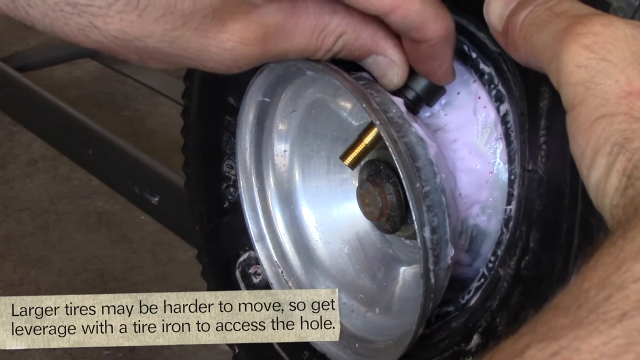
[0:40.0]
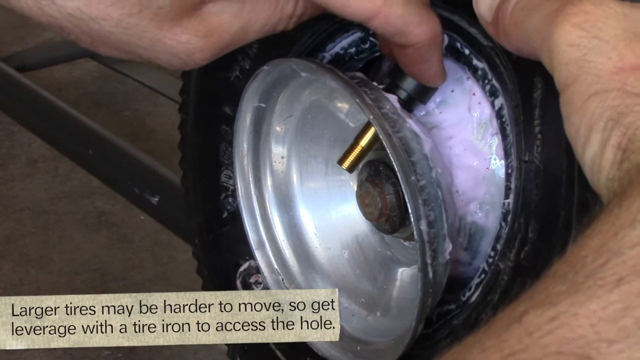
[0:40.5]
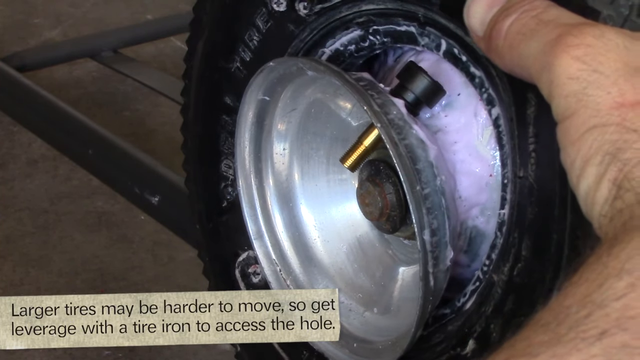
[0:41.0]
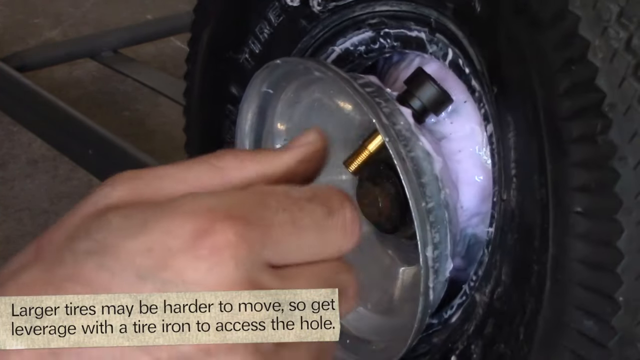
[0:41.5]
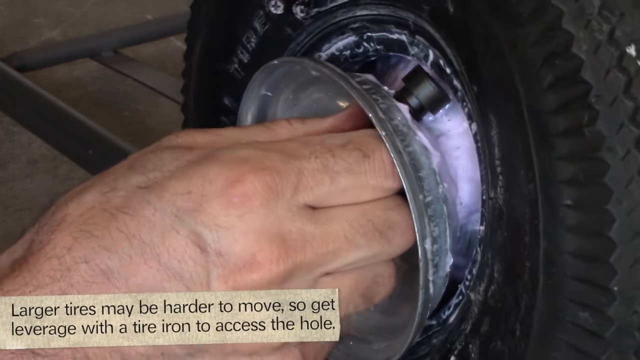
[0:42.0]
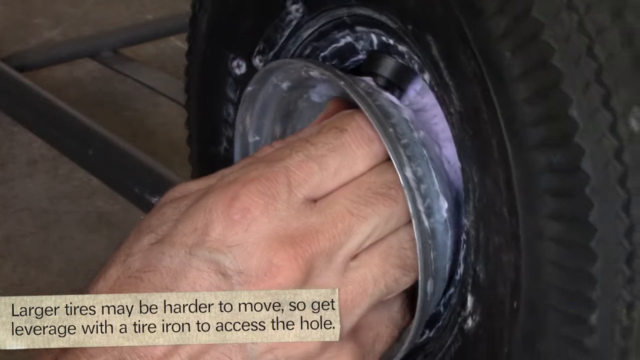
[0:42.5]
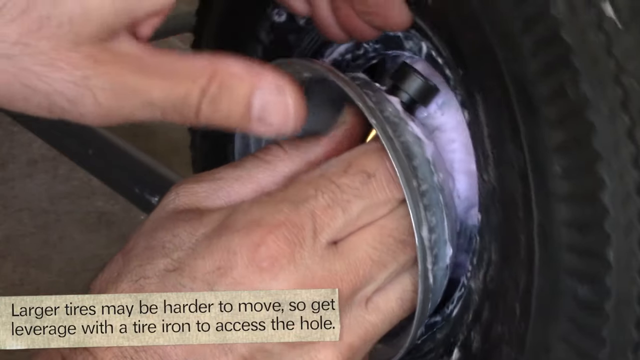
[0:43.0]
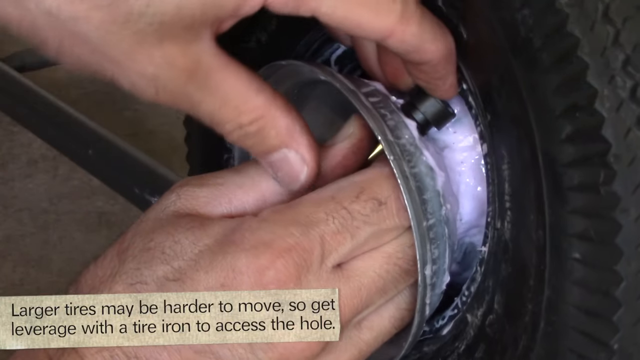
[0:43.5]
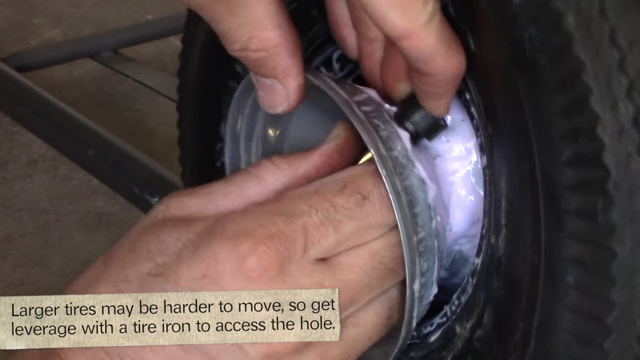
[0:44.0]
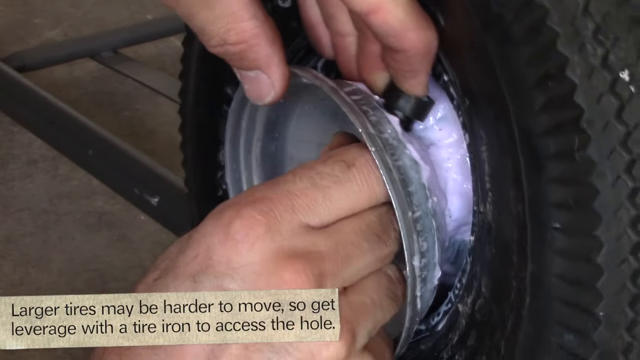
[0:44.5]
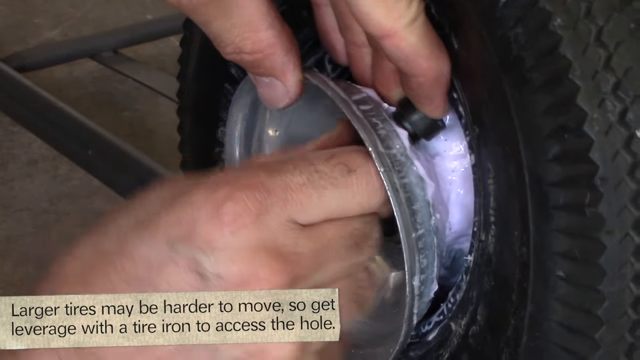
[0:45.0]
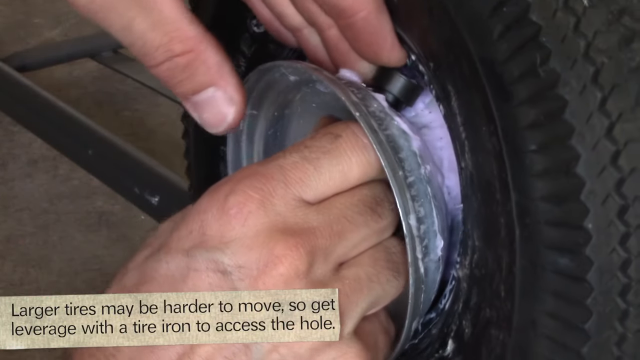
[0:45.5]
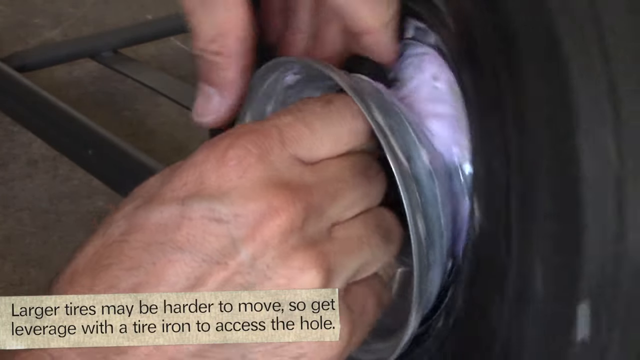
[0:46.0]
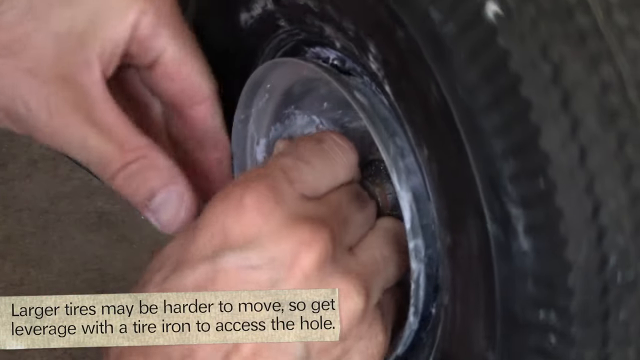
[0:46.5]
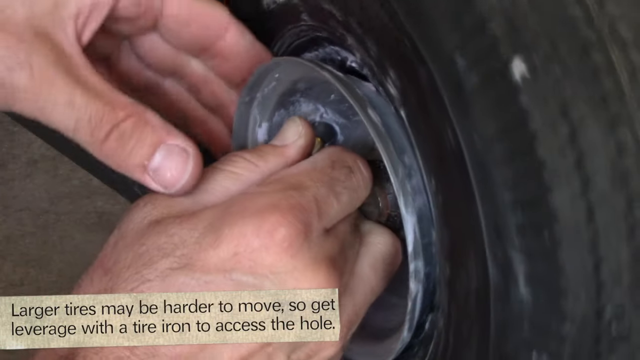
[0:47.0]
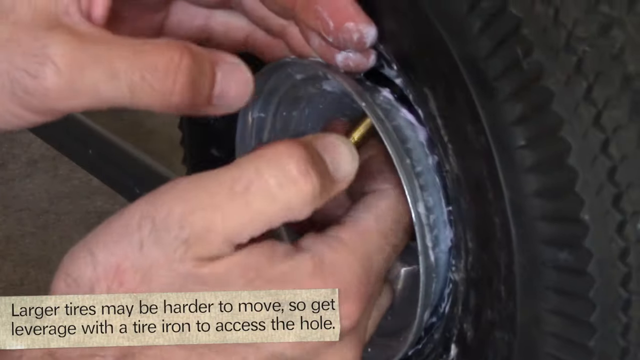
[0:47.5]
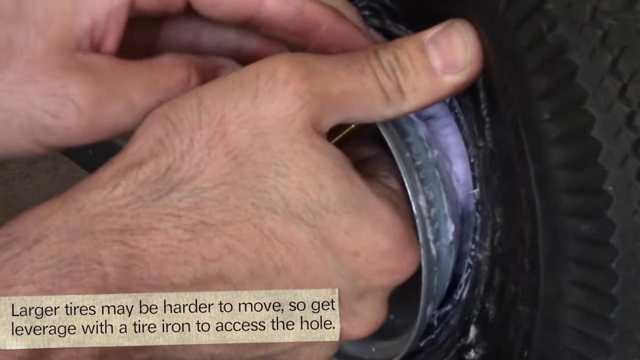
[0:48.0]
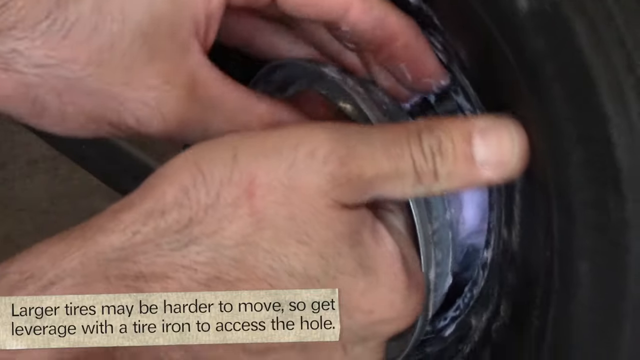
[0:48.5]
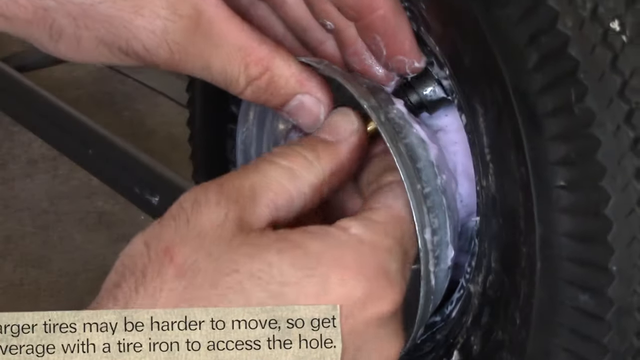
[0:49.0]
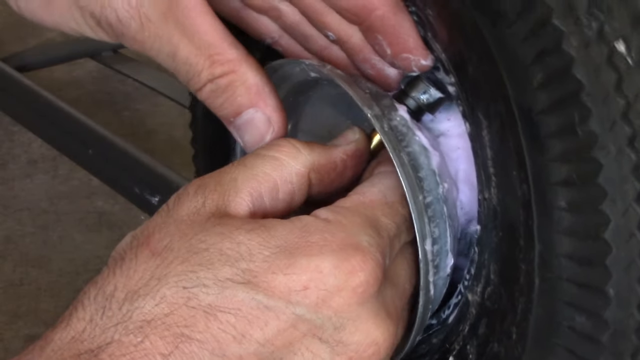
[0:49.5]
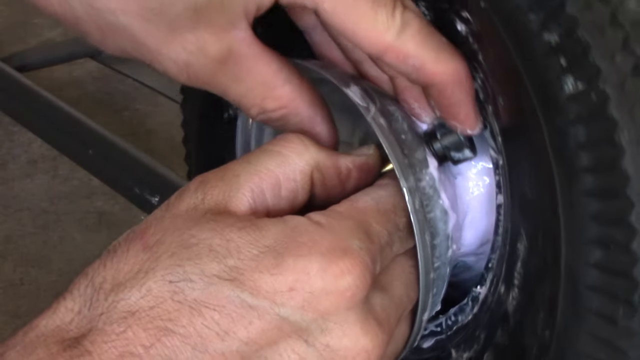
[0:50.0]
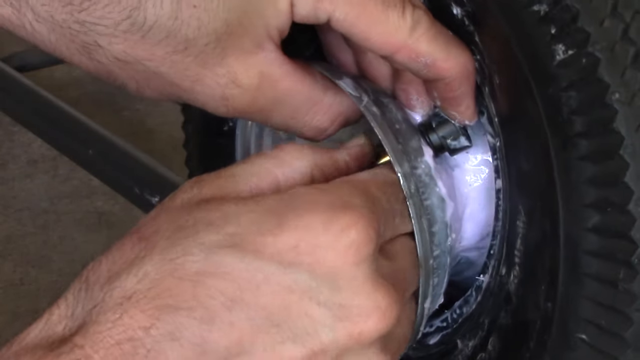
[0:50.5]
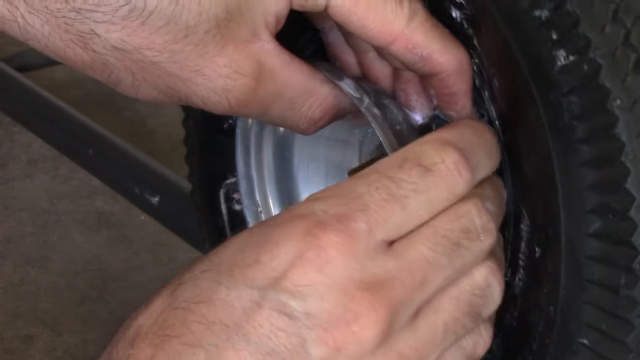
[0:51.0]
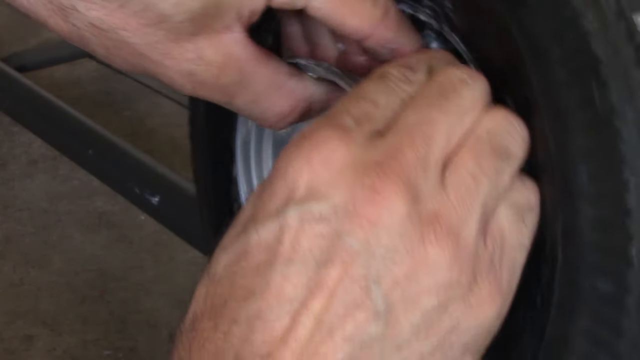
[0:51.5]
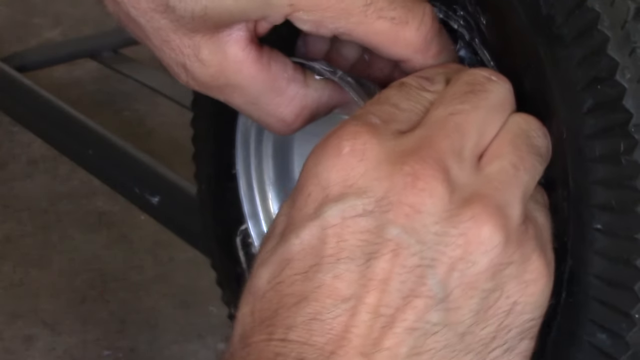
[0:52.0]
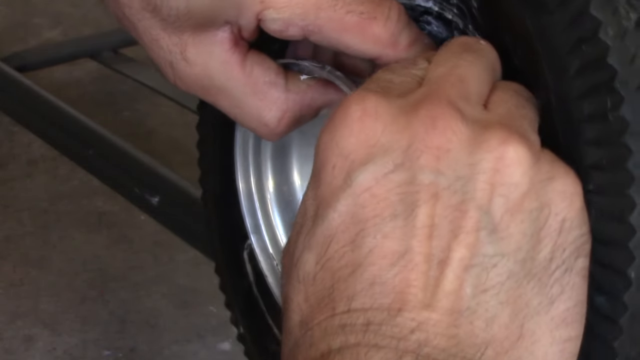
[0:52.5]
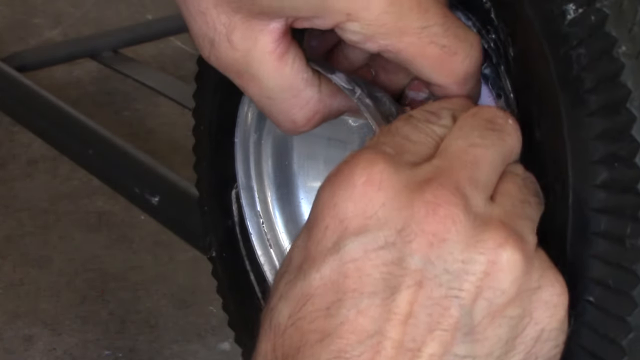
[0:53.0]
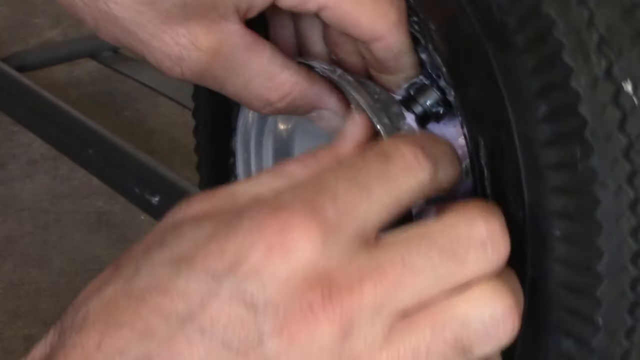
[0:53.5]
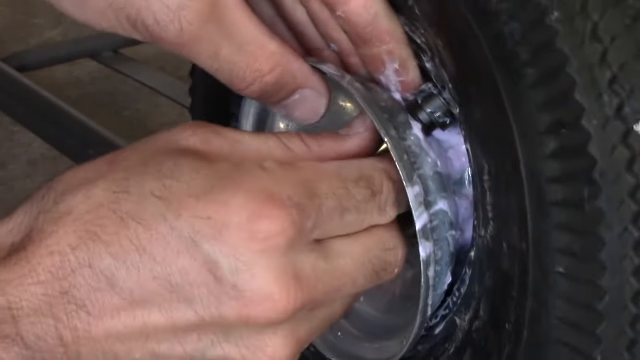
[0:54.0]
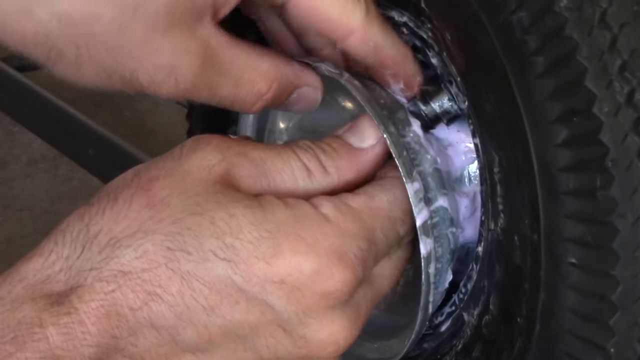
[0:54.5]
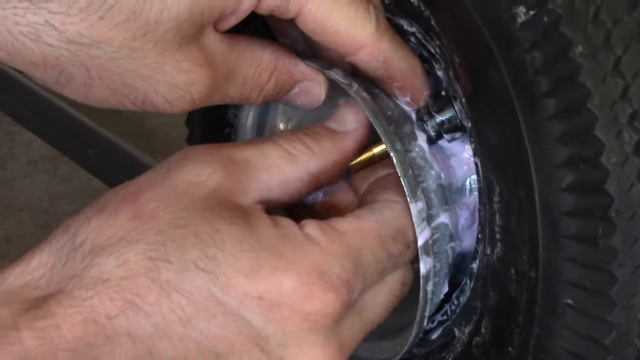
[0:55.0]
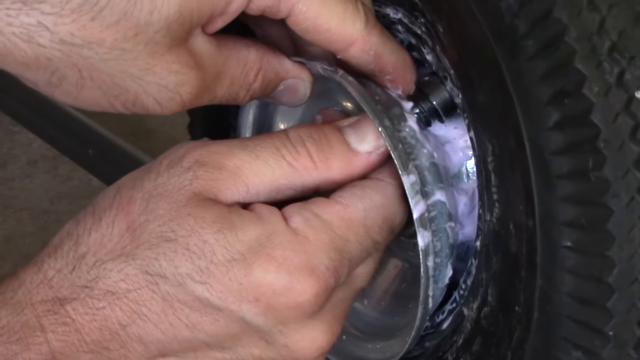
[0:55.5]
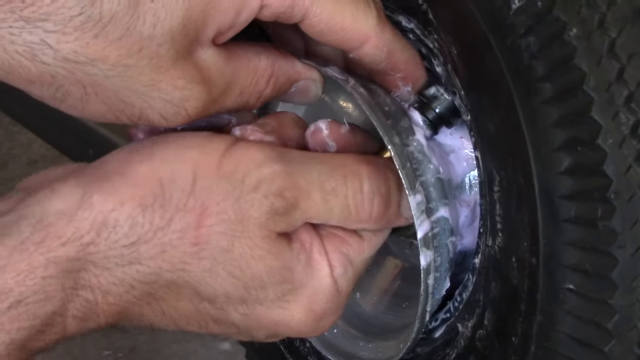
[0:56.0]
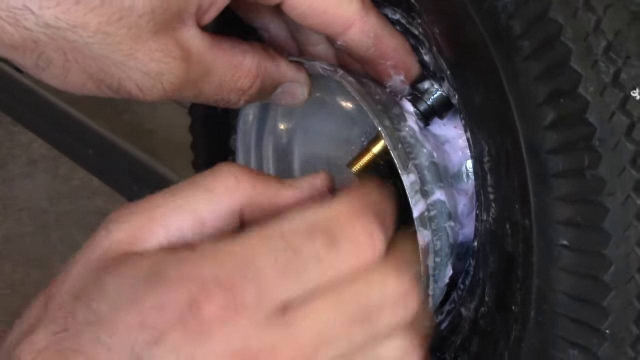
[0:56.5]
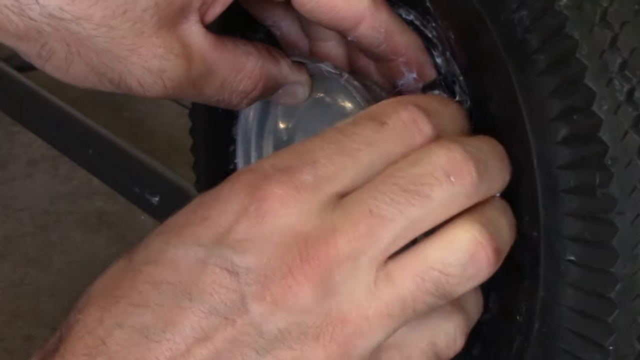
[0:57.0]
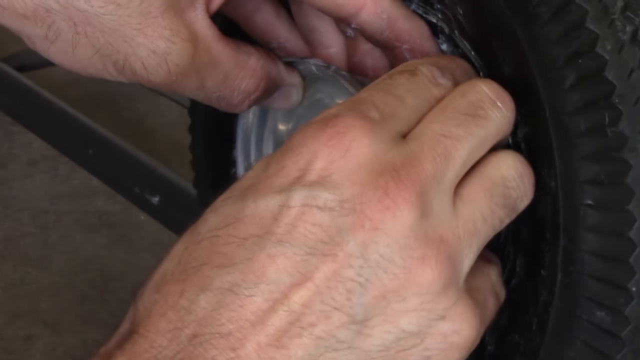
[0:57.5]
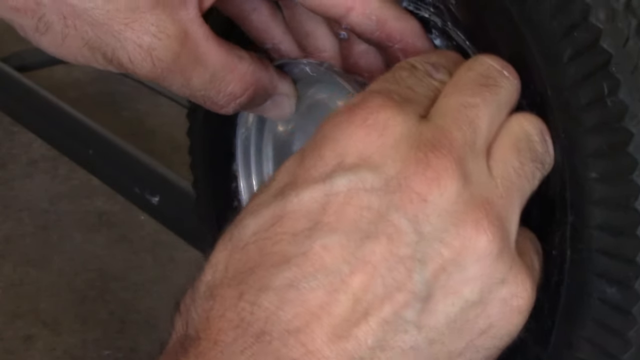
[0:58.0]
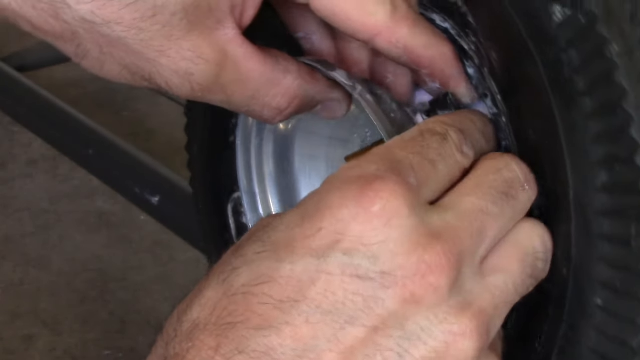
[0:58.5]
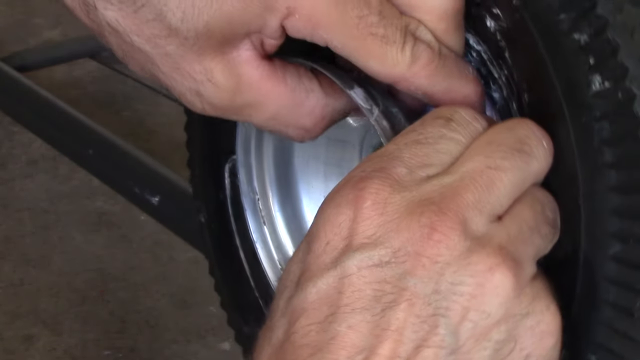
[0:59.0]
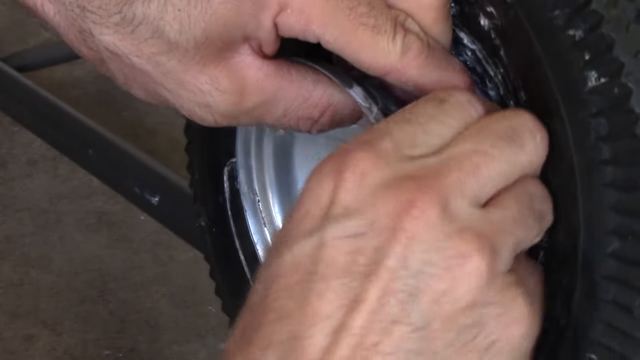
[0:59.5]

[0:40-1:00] The man has rotated the tire so the area with the valve stem is toward the top. He uses his right hand to separate the rubber of the tire from the metal of the rim while his left hand inserts the new valve stem through the back of the rim, pushing it through toward the front. He then moves his hand, pressing the back of the valve stem with his left hand and pulling on the metal of the valve stem with his right hand. He starts twisting the valve stem with the thumb and forefinger of his right hand to make sure it is seated properly in the rim. The light pink substance, still unidentified, remains visible.